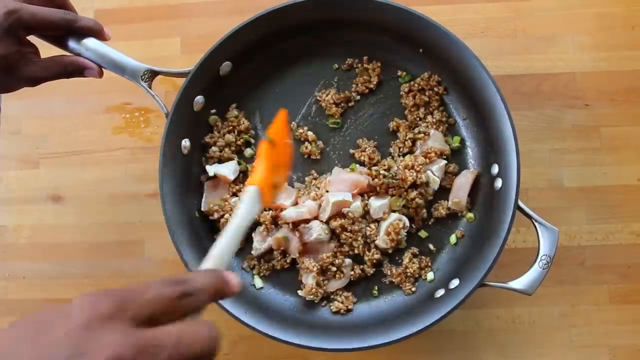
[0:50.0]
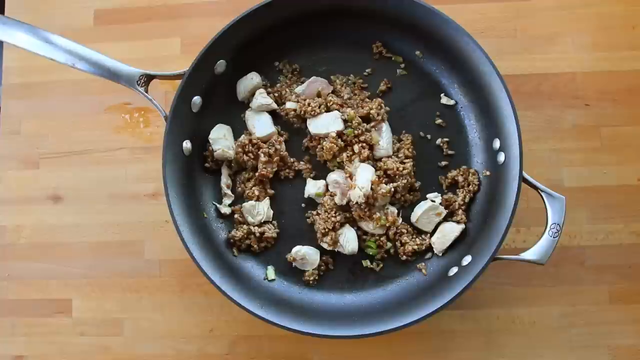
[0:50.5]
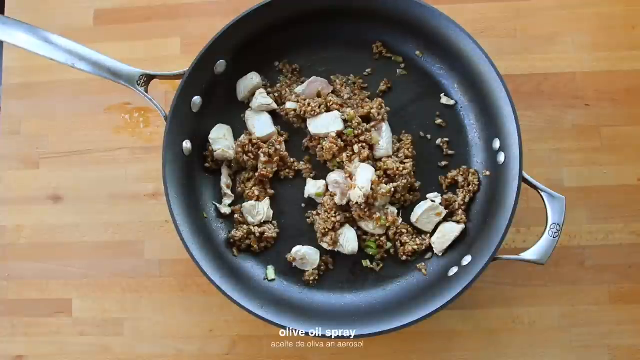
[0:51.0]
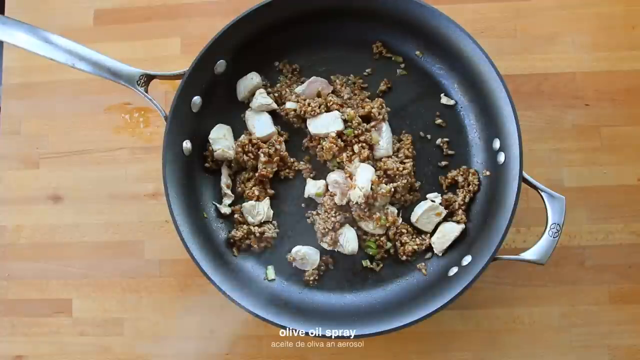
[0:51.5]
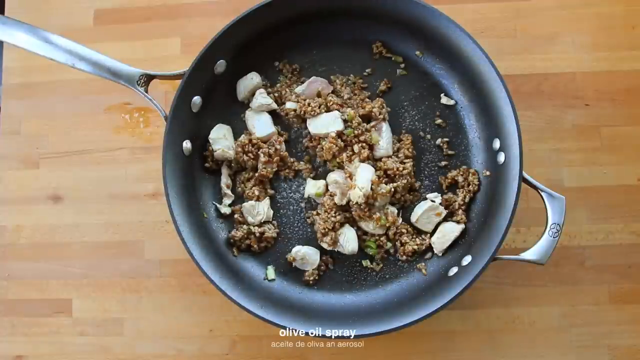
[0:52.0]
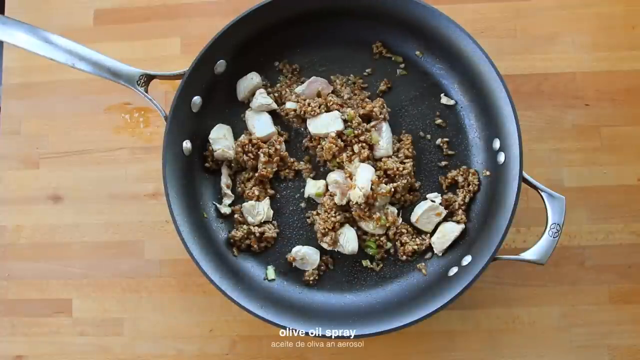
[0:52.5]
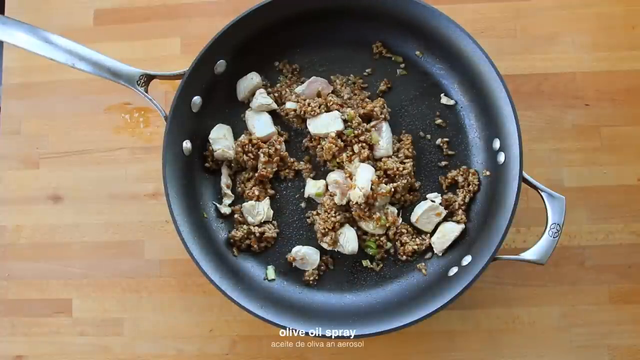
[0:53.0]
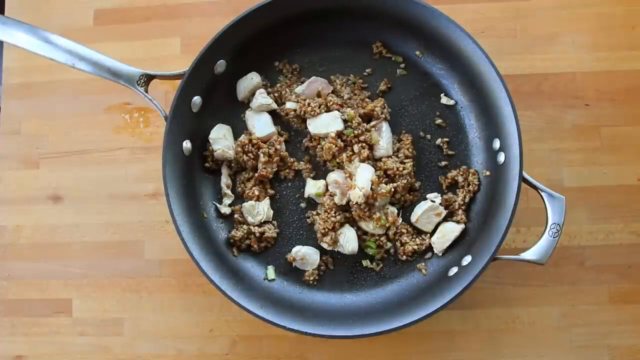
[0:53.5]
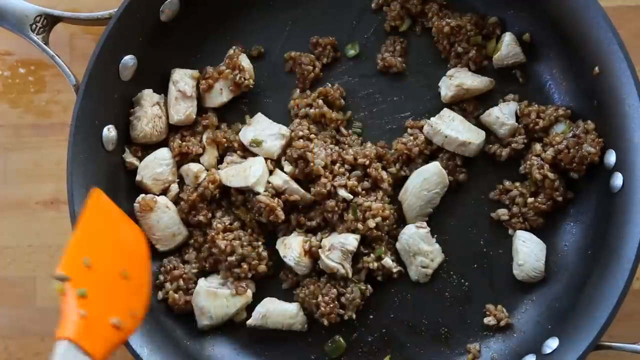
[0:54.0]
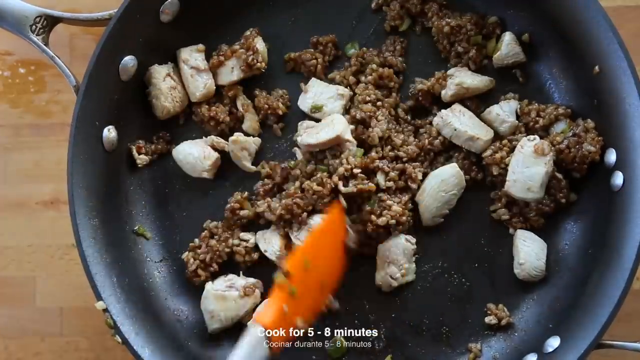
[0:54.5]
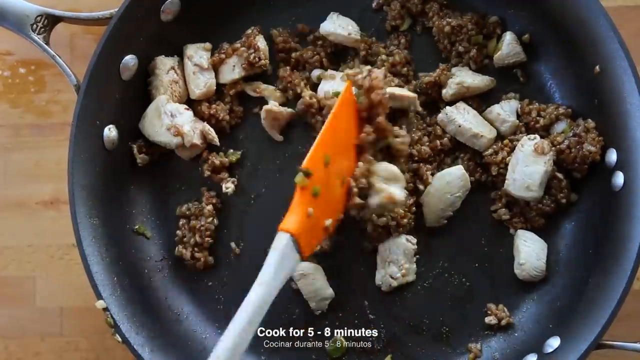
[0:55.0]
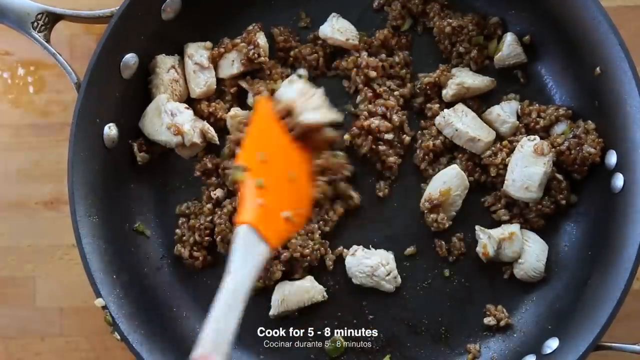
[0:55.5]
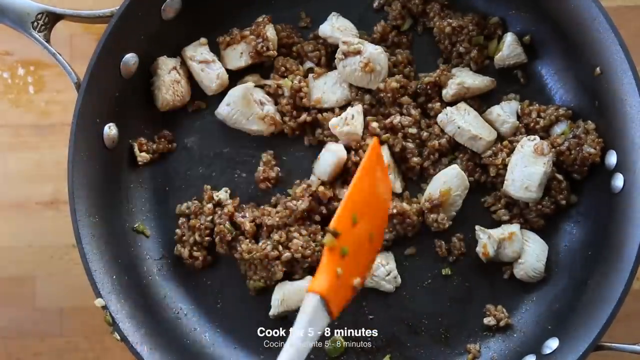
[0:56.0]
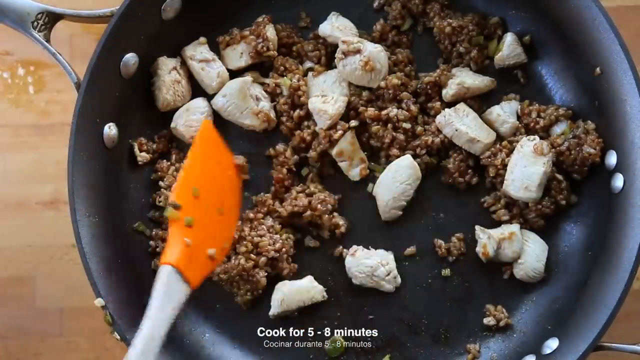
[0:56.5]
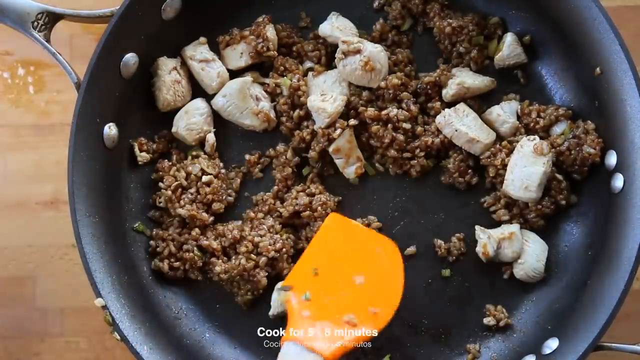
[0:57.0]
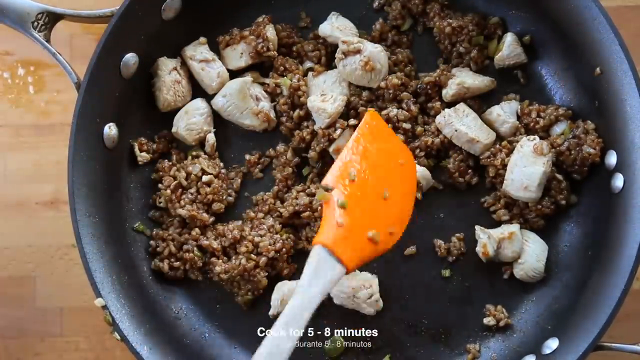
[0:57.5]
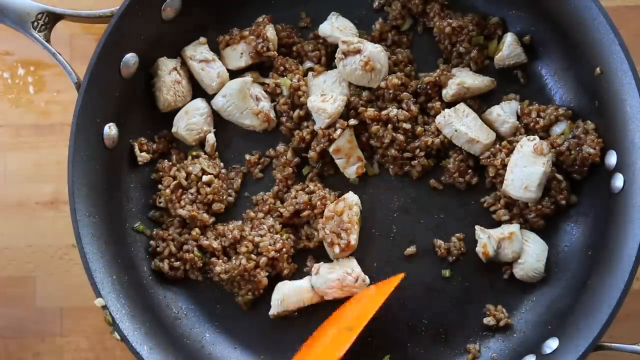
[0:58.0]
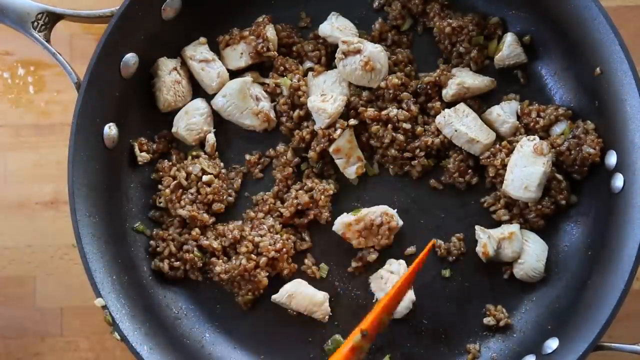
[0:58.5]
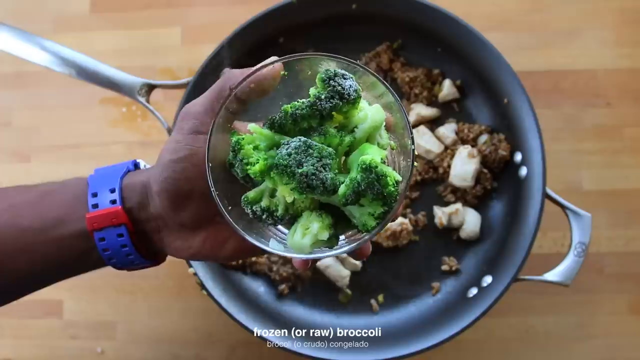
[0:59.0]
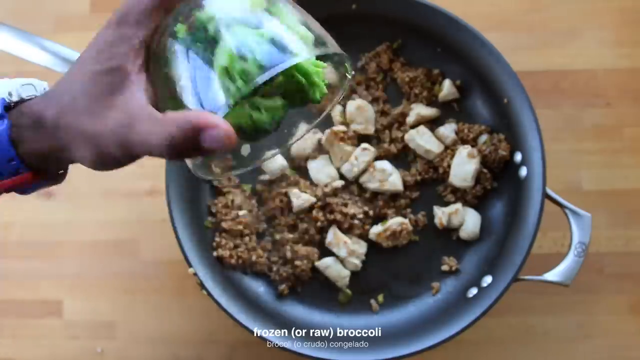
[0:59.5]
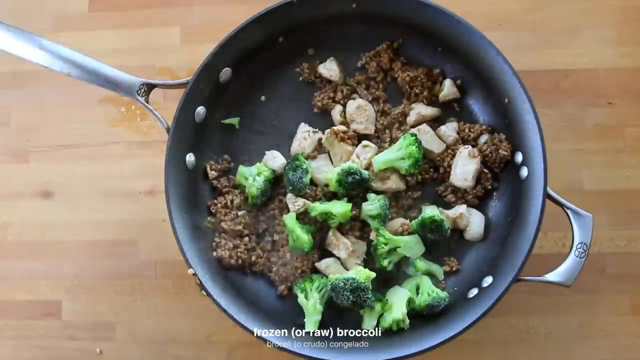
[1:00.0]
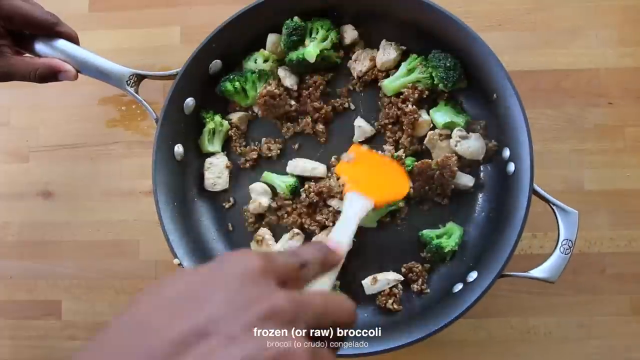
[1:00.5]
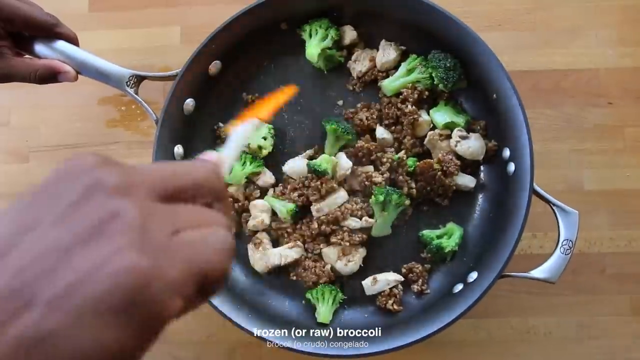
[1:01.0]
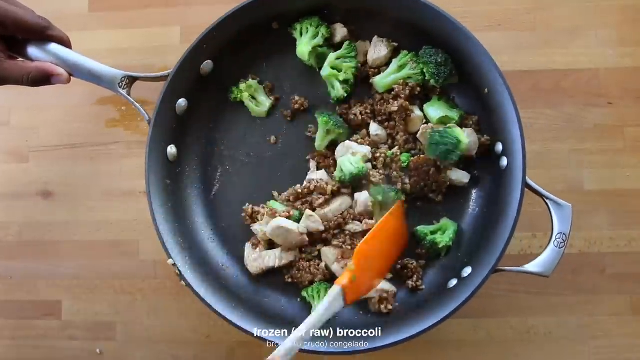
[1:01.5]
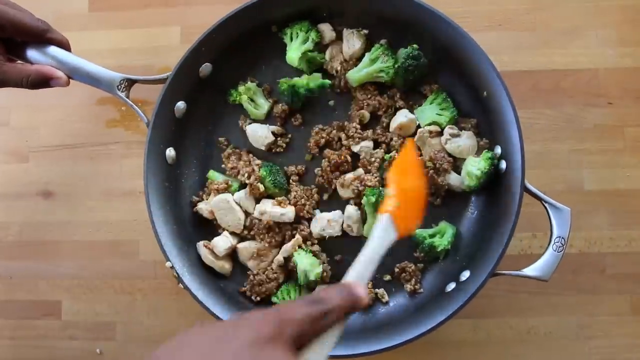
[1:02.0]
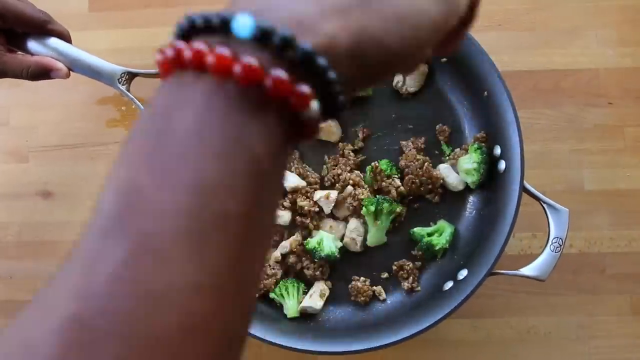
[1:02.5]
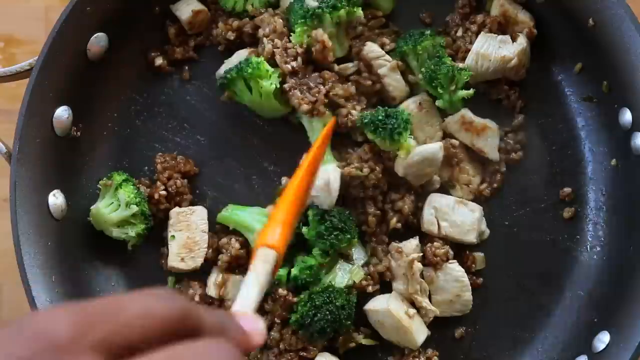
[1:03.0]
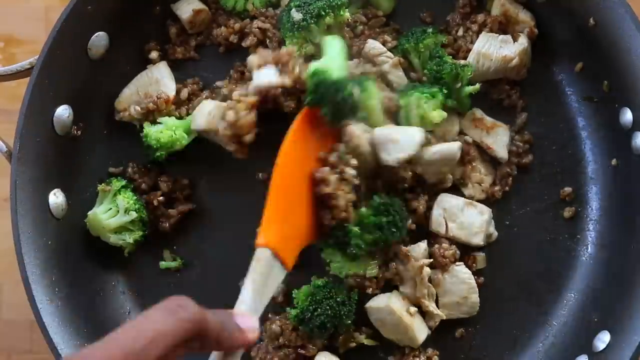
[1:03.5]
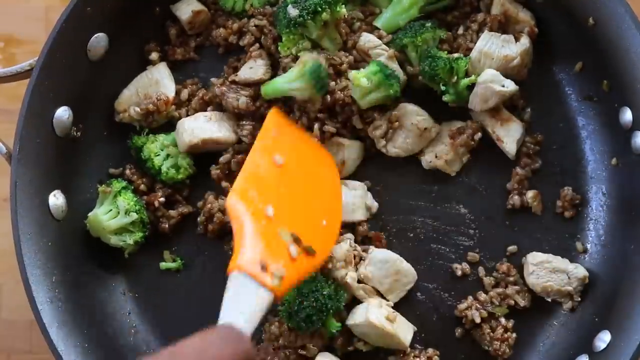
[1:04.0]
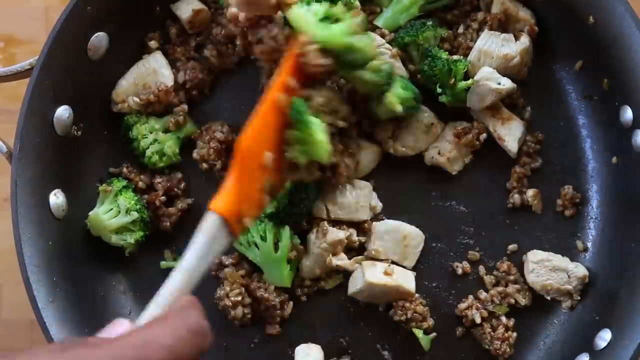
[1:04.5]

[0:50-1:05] A black frying pan already holds pieces of chicken, brown rice and various spices cooked and mixed together, with a wooden, almost butcher block style countertop as the backdrop. As items are added, a subtitle at the bottom describes each one. Olive oil is sprayed in, labeled "olive oil spray". A person kind of slides the ingredients around in the pan, mixing them together, while text reads "cook for five to eight minutes". In the next cut, broccoli is added from a container, with text saying it can be either fresh or raw broccoli.